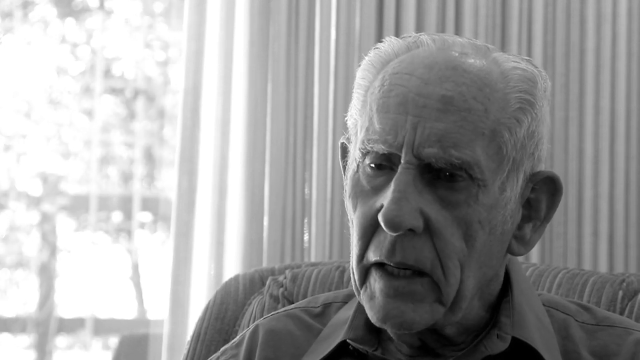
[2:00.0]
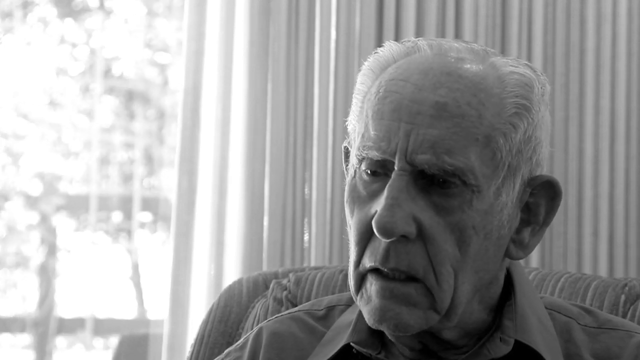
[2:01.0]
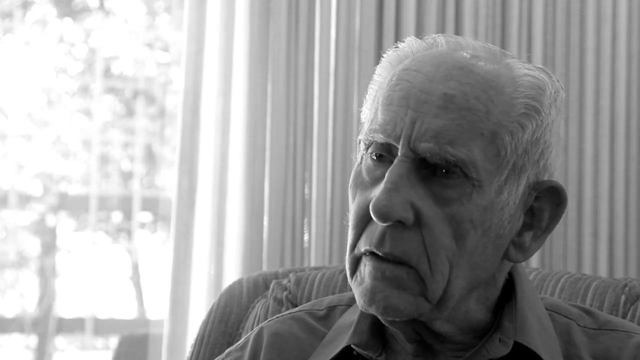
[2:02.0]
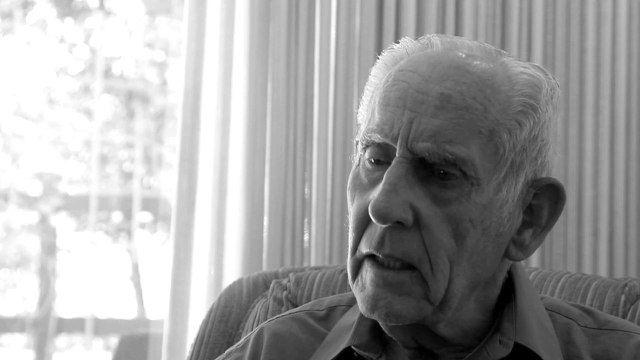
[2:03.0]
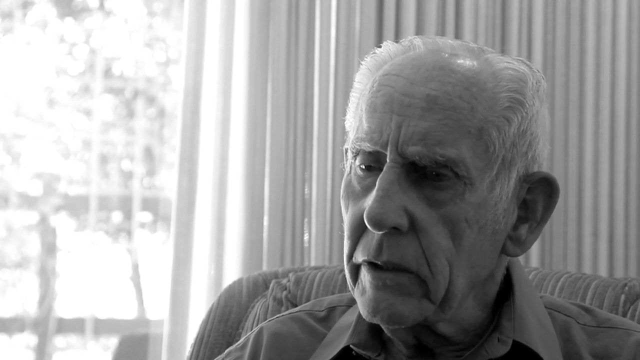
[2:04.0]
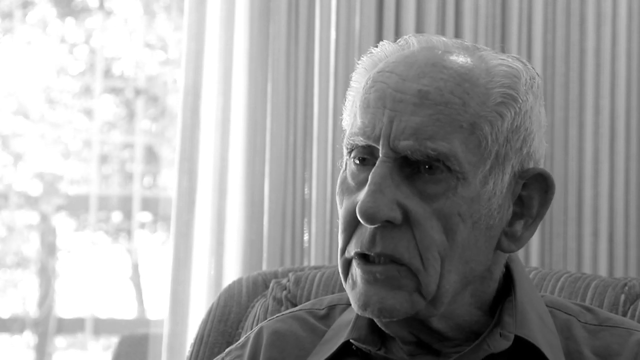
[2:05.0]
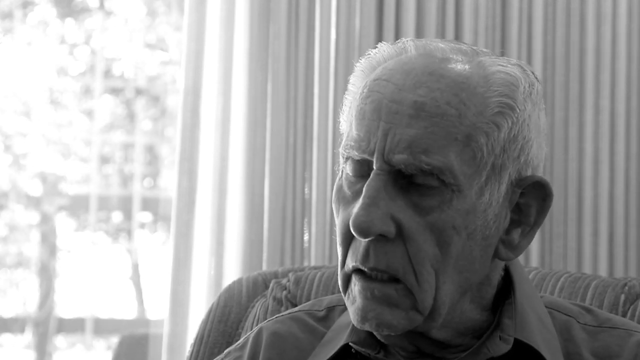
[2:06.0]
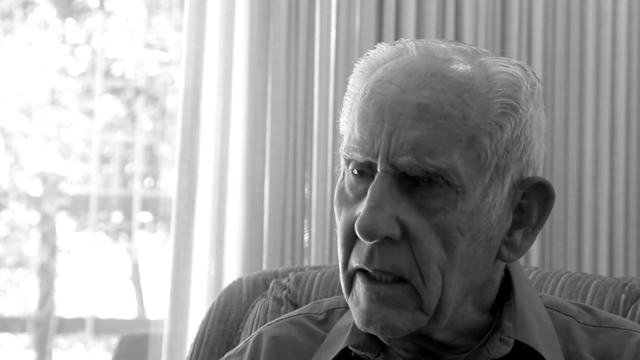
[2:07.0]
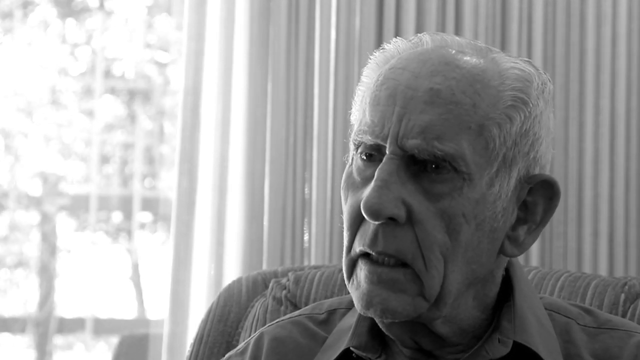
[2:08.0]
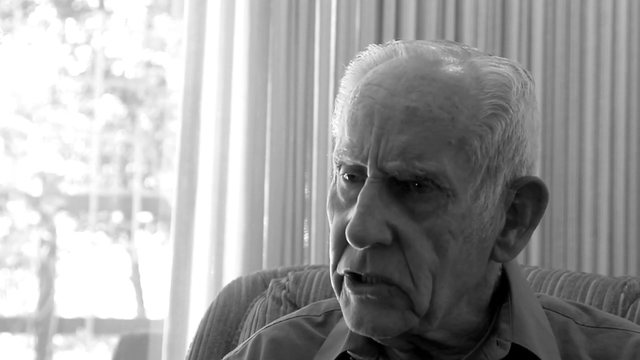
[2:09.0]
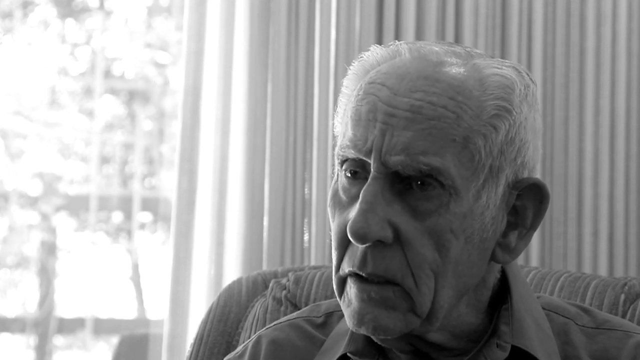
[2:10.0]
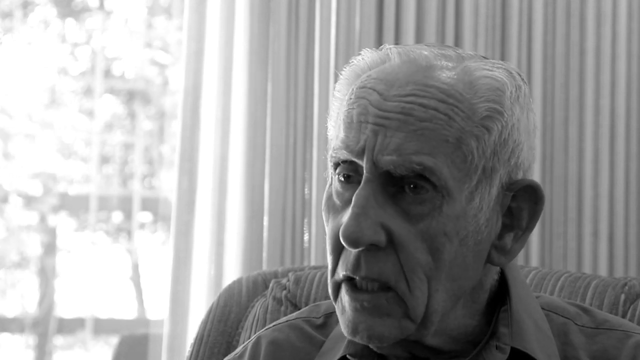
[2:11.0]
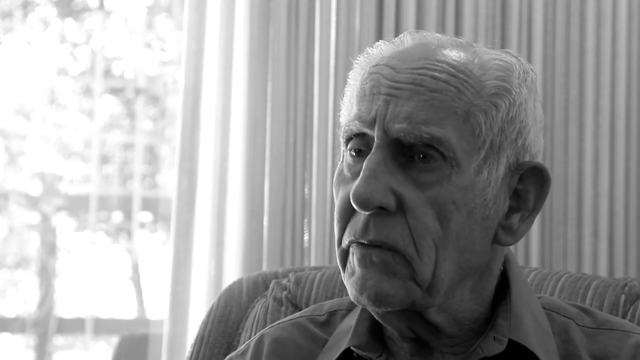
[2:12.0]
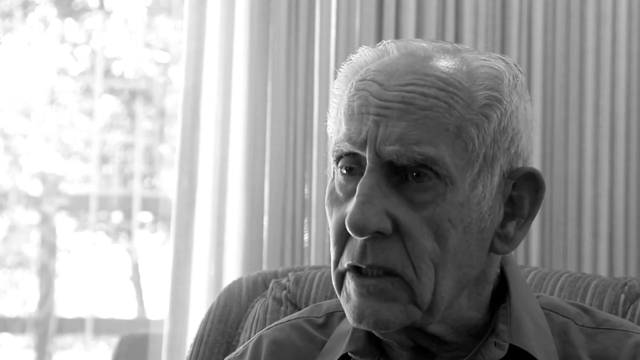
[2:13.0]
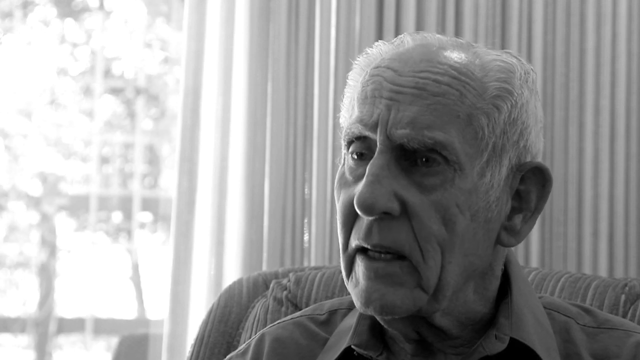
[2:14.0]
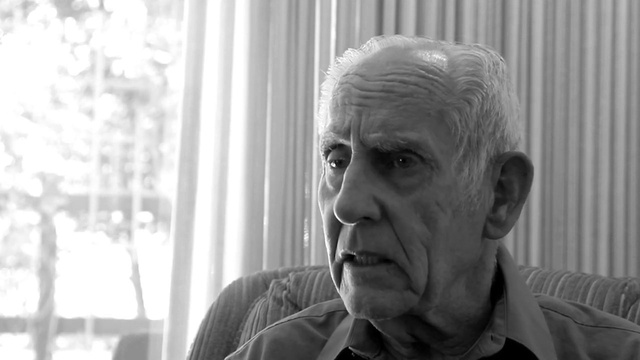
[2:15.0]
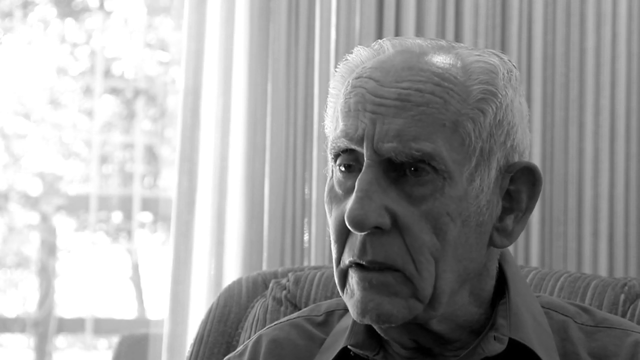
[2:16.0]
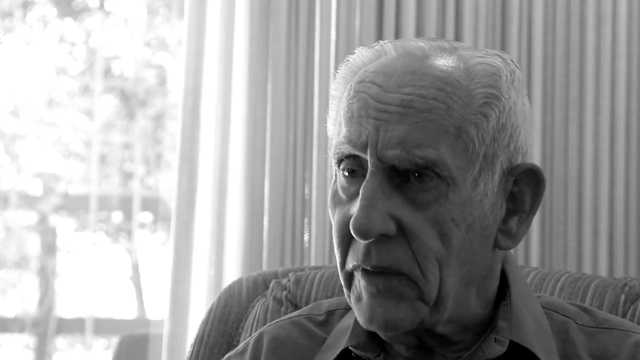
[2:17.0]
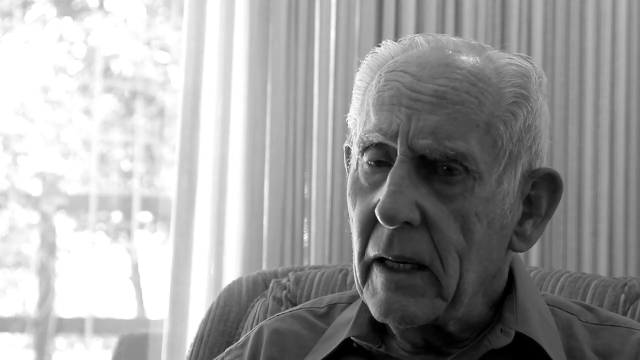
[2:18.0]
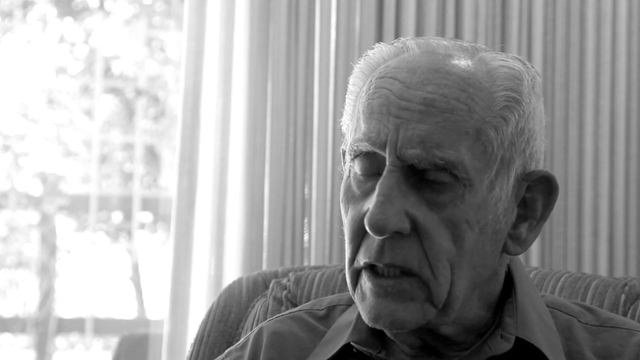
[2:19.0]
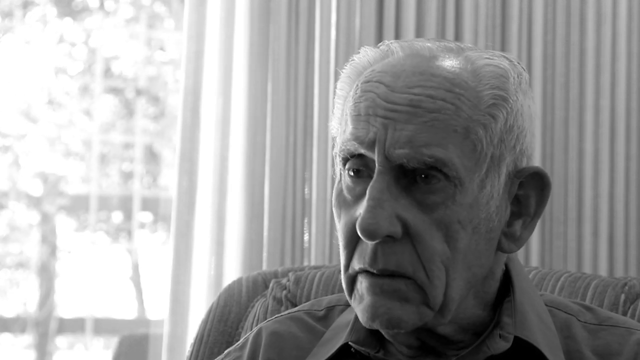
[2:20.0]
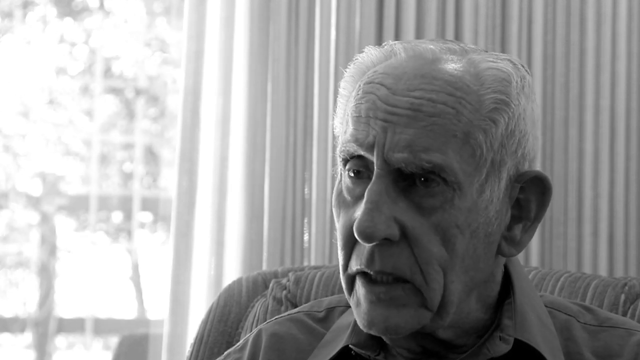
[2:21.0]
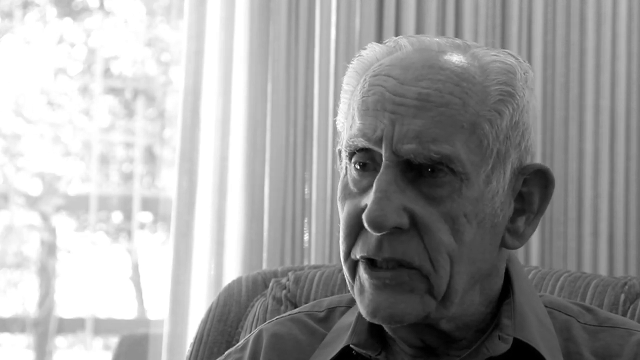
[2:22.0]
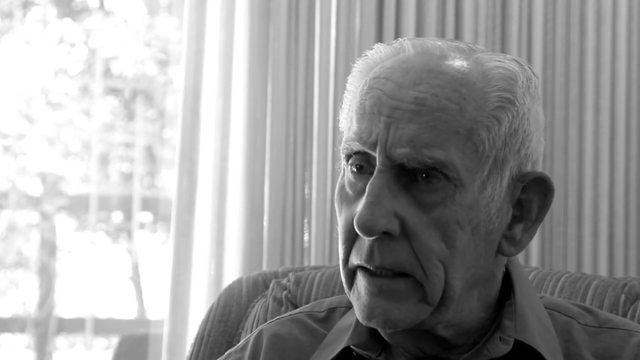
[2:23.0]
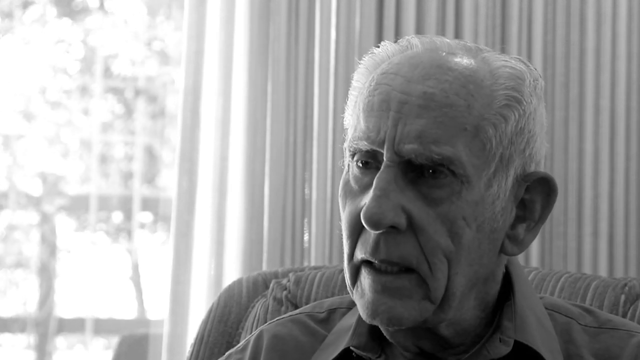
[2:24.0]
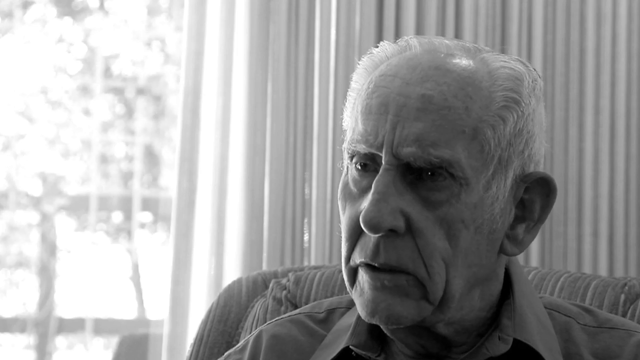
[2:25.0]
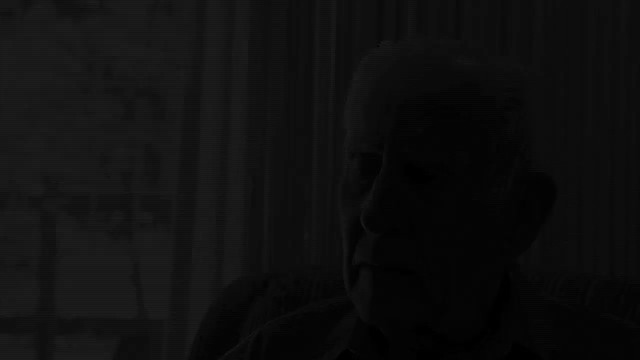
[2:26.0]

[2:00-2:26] The old man continues talking in his front room on a sunny day, with the garden in the background.